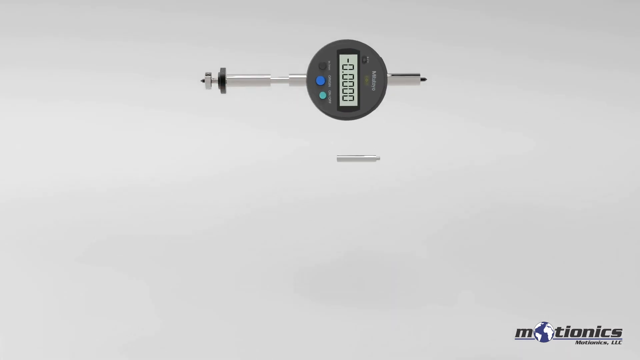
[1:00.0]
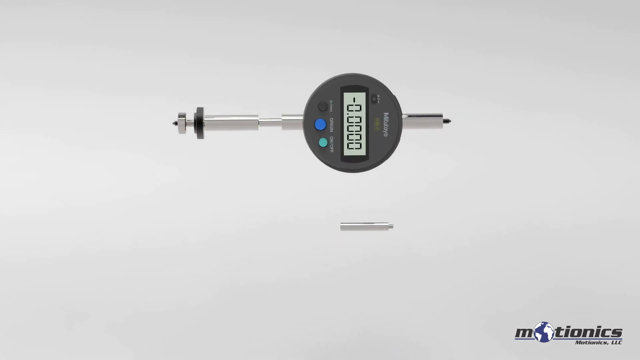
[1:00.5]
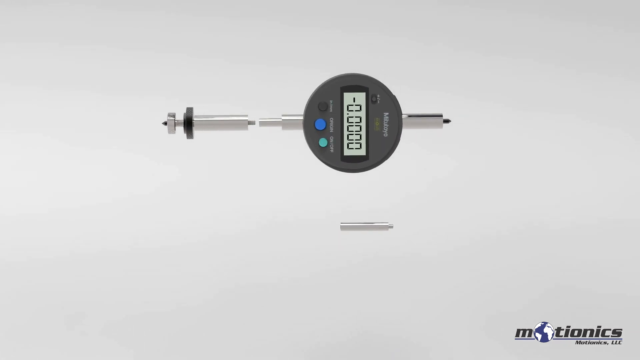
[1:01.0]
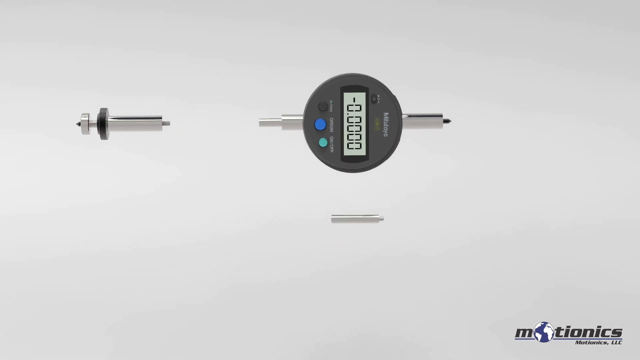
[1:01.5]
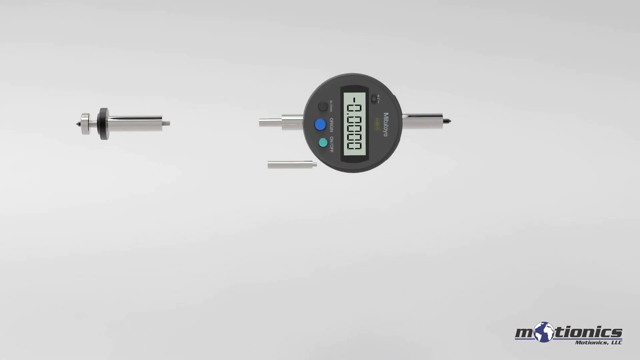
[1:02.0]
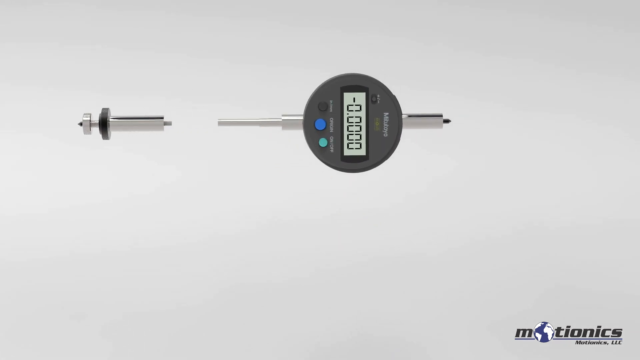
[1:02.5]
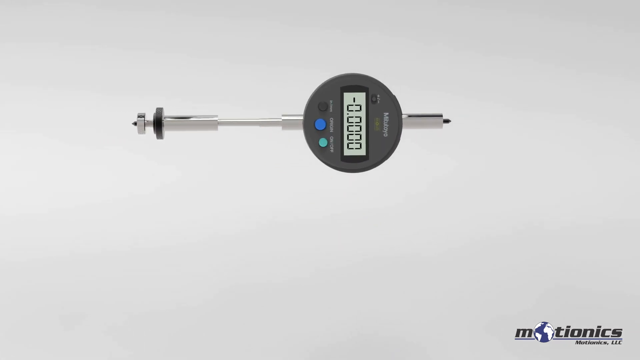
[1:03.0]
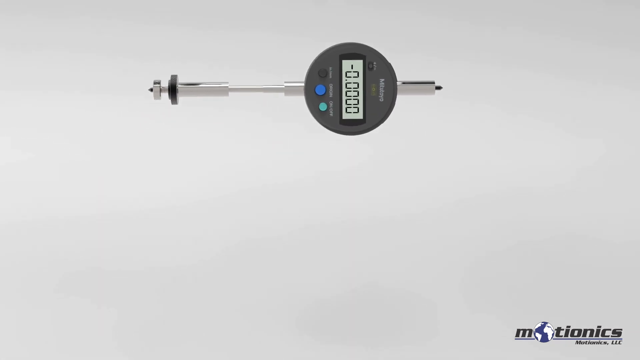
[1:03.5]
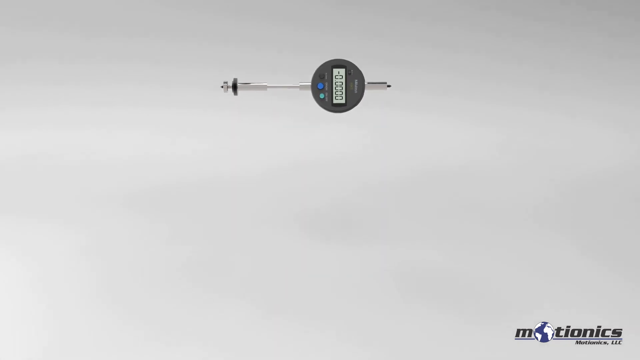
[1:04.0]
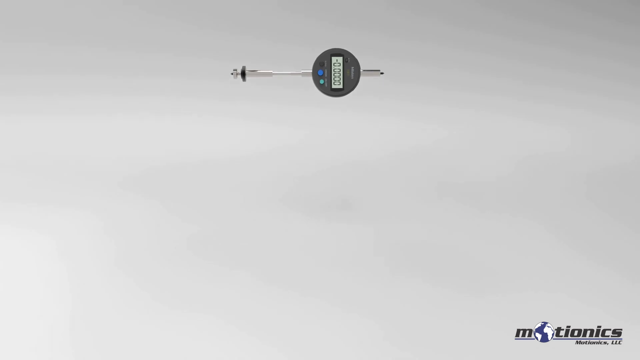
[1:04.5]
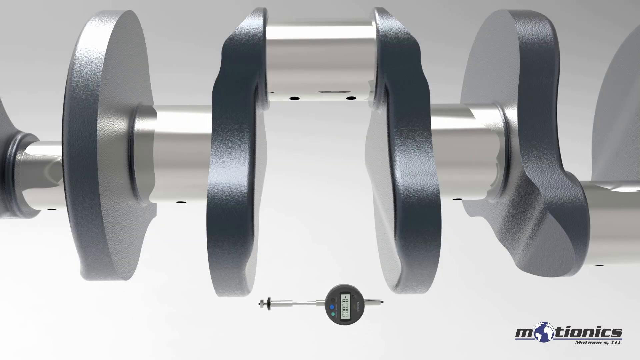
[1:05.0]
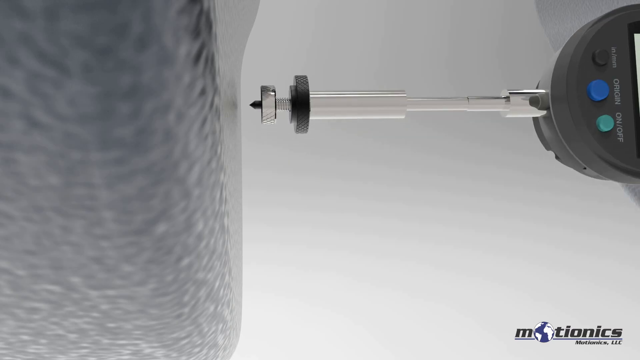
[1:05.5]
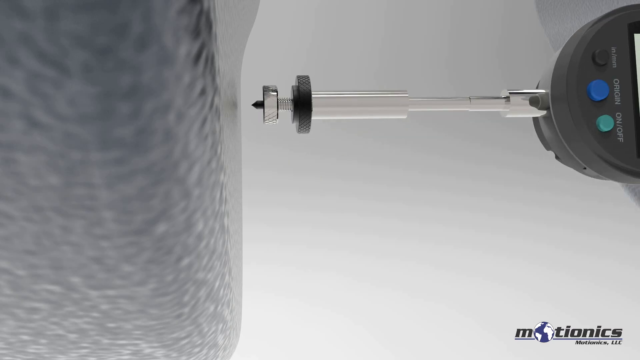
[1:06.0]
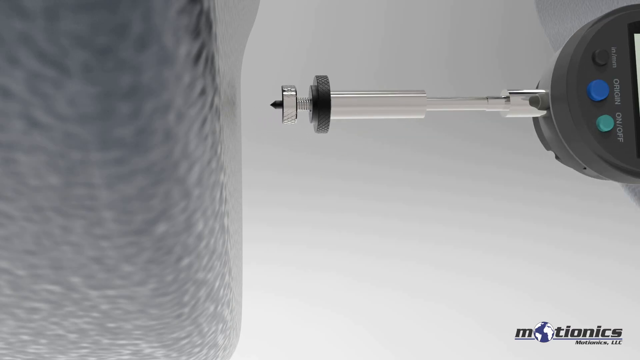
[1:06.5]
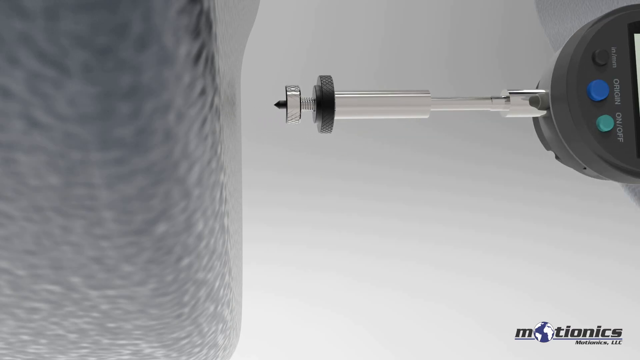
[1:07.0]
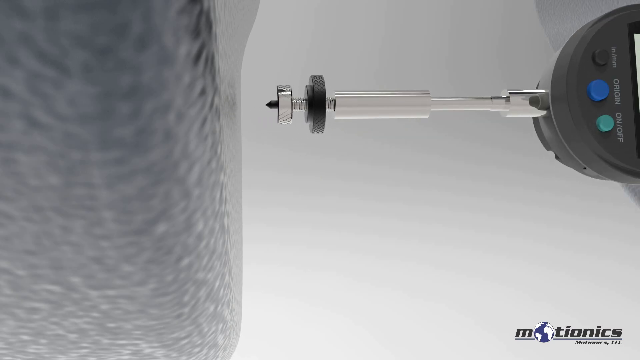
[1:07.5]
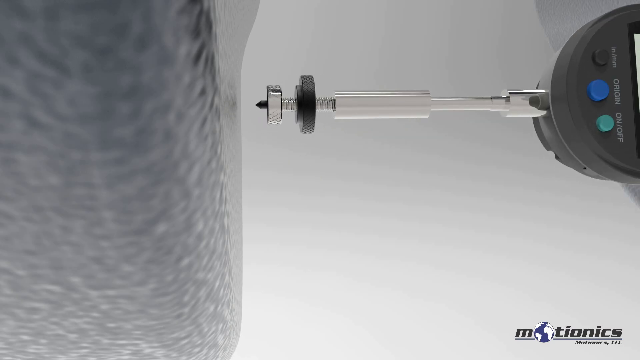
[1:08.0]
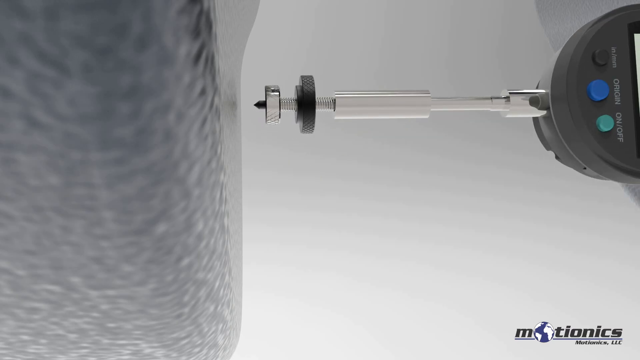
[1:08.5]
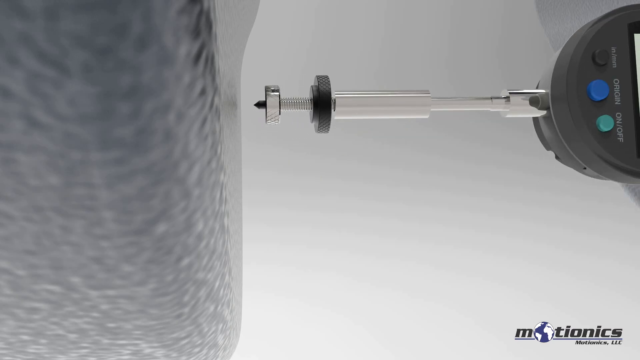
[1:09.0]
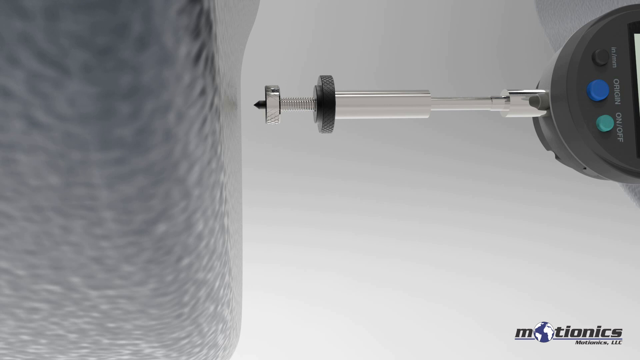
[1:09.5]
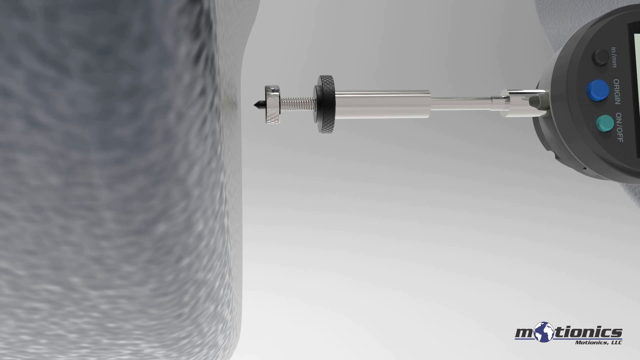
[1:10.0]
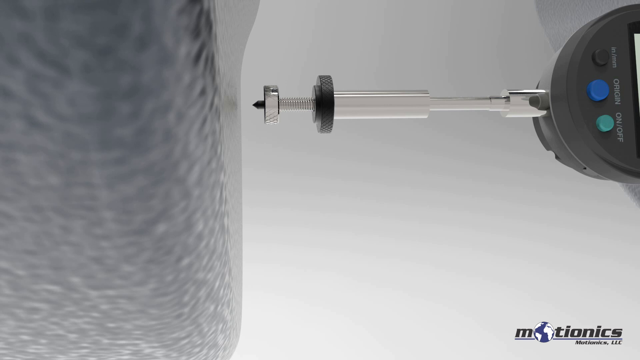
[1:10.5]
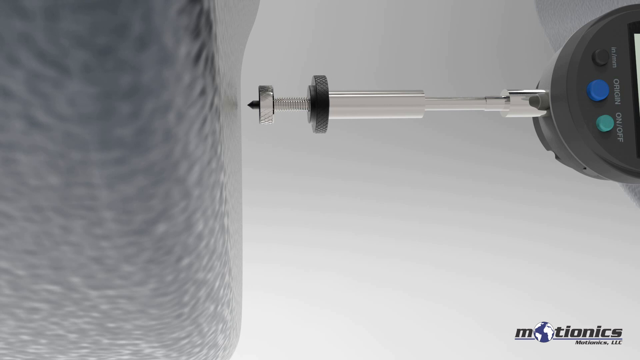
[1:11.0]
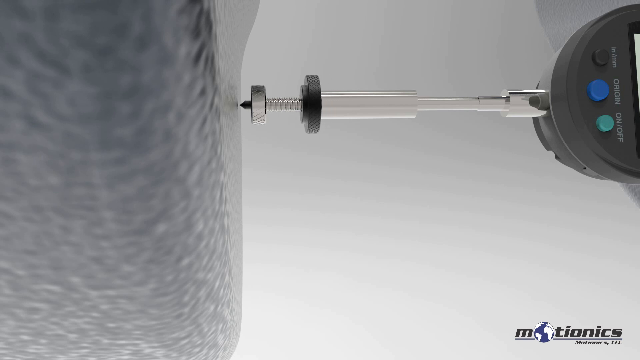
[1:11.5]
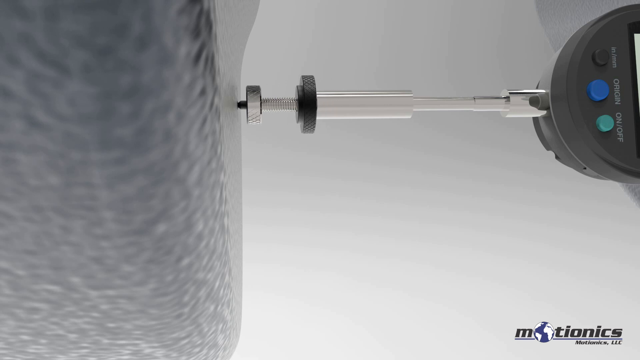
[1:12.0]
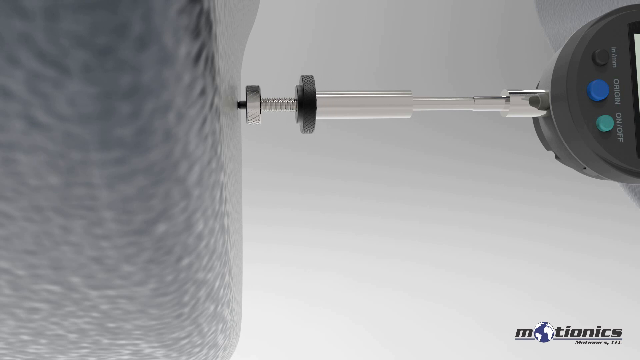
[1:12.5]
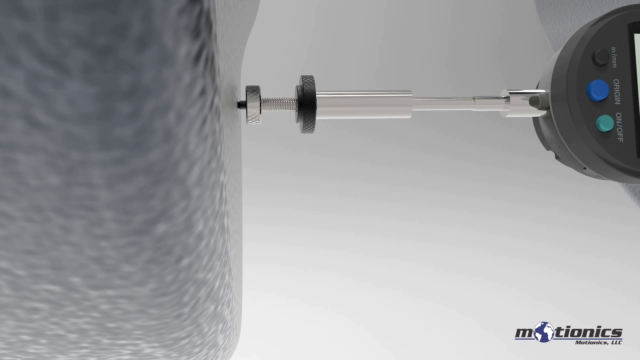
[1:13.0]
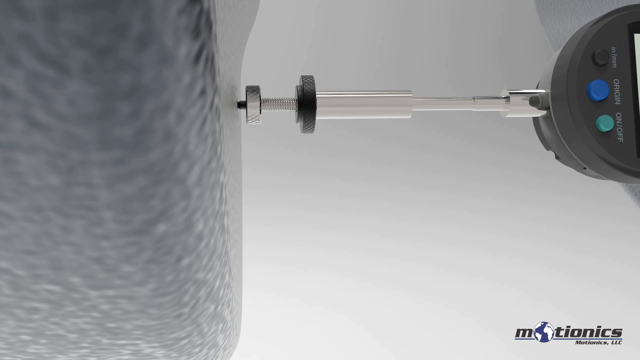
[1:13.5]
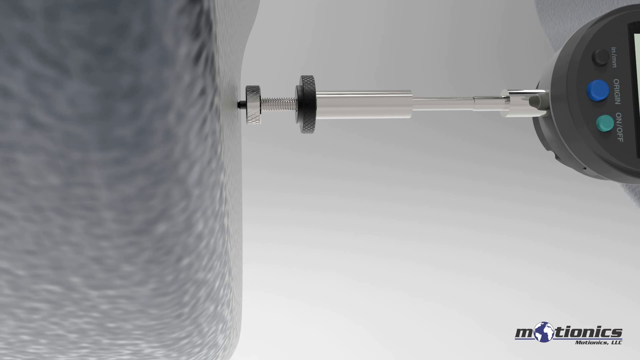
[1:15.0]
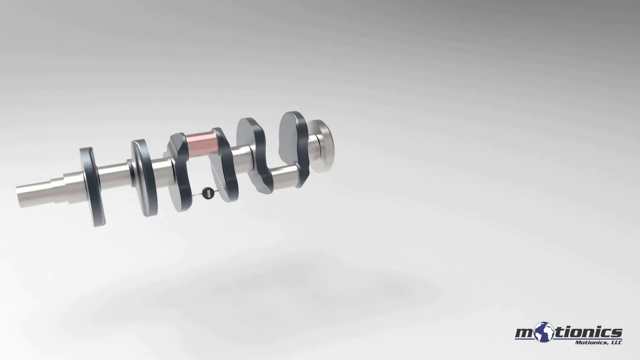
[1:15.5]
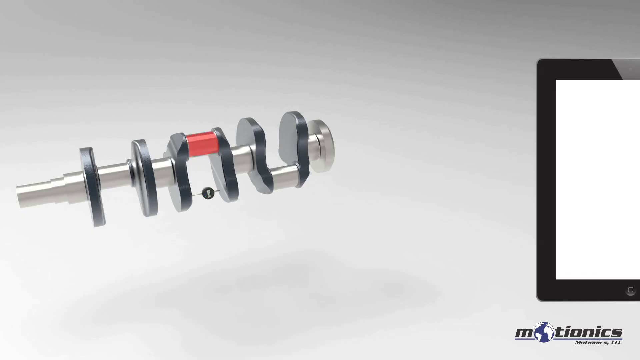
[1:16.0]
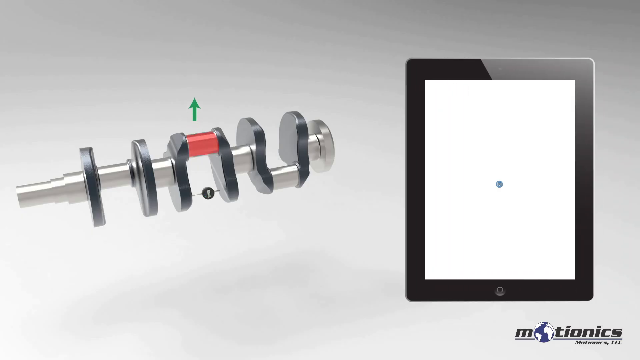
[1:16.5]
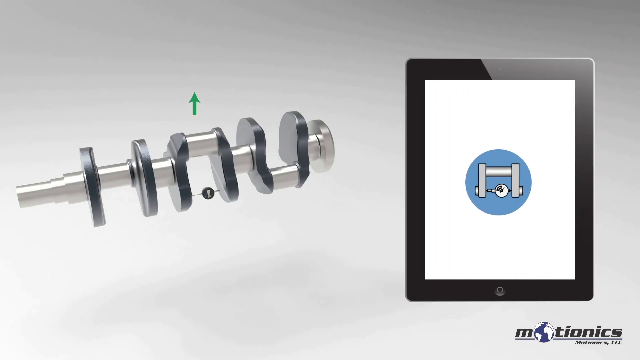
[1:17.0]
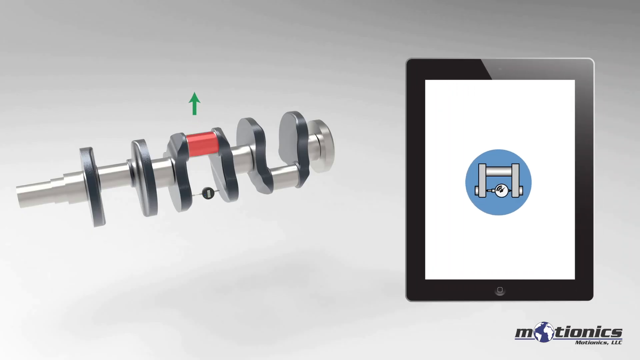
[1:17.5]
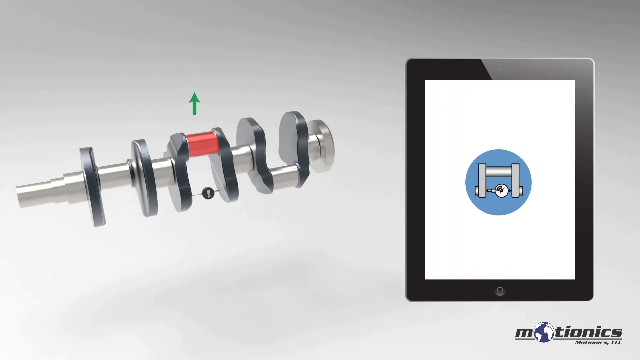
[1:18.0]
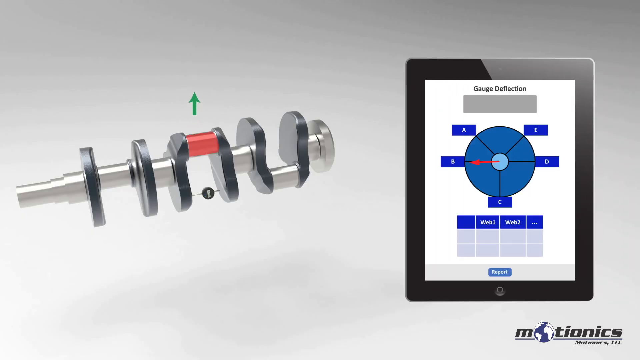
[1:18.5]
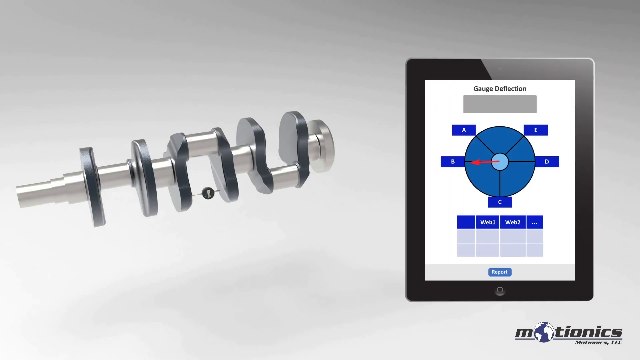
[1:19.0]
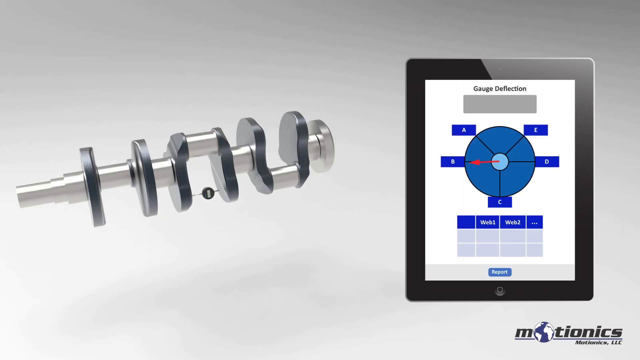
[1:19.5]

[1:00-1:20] On a plain gray background, a small silver bit, tilted sideways, is below the electronic device. The left part of the device, the tubular silver part, slides off to the left in a straight line. The smaller piece from the bottom goes up at an angle, sliding in where the other piece was, and then slides to the right to attach. The camera zooms out and the piece slides up and off camera, followed by a close-up of it in the middle of the cylindrical spinning device: the flat side of one piece of that device is visible on the left and the bottom half of the electronic device on the right. The bottom of the electronic device screws itself out toward the left, a black cylindrical piece slides back toward the right, and then the entire bottom piece of the electronic device slides to the left, as if someone were pushing a syringe, with the point going into the flat part on the left. The scene changes to the cylindrical device on the left side of the screen at a slight upward angle, with the electronic device shown very small in the middle. The top piece of the middle part of the cylindrical device is highlighted in red, and a green arrow appears behind it pointing upward. As the arrow moves up a bit, the tablet appears on the right side of the screen with the blue circle and an icon that seems to be of the device on the left in the middle of the circle. The middle piece blinks red, and the tablet reads "Gauge Deflection" with what looks like a pie chart, teal in the middle and darker blue on the outside, a small arrow pointing to the left, and the letters A, B, C, D and E in blue boxes. Below it is a table reading "Web 2" and "Web 1" with empty boxes below, and a button at the bottom reading "Report".